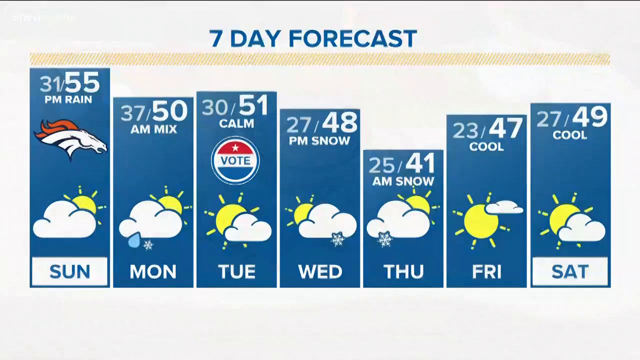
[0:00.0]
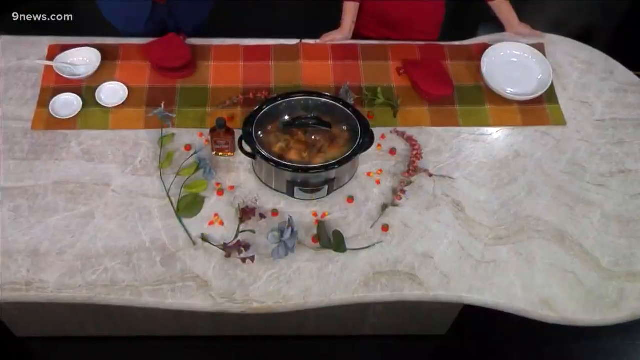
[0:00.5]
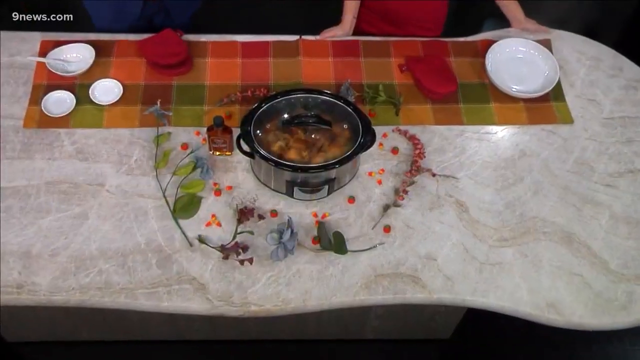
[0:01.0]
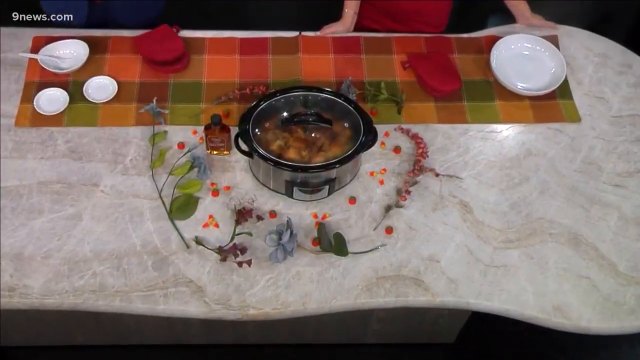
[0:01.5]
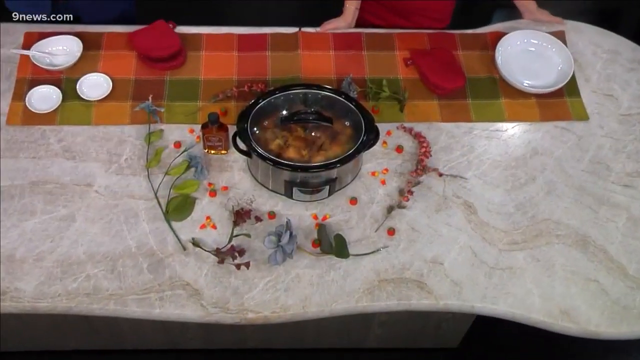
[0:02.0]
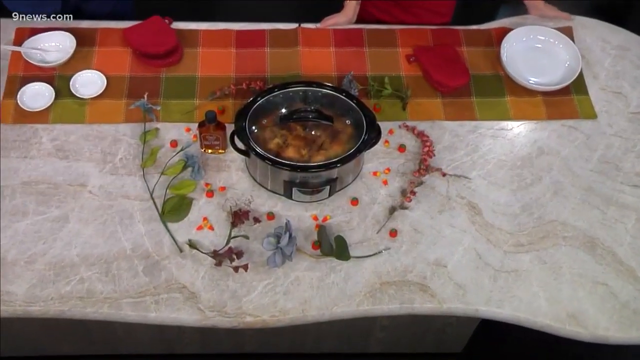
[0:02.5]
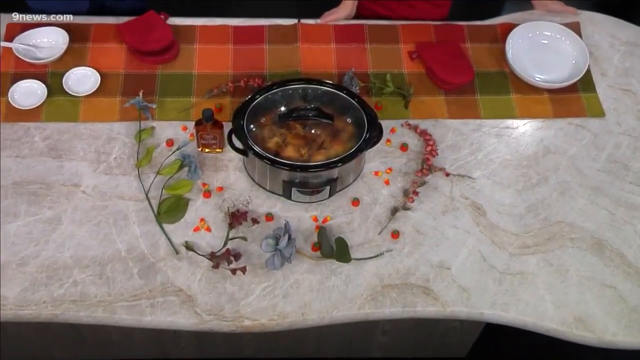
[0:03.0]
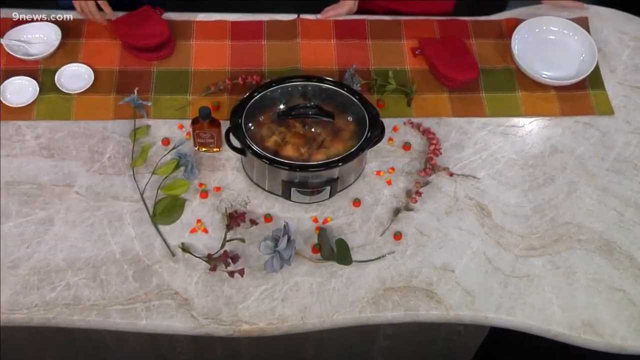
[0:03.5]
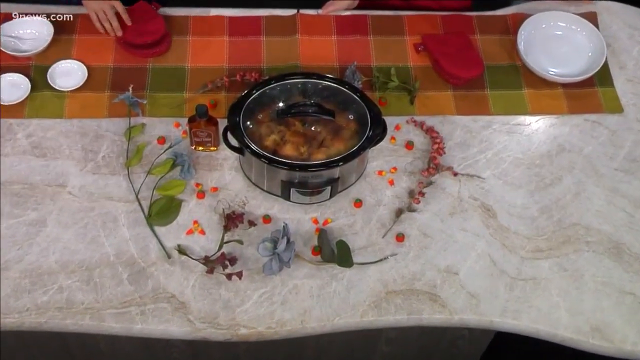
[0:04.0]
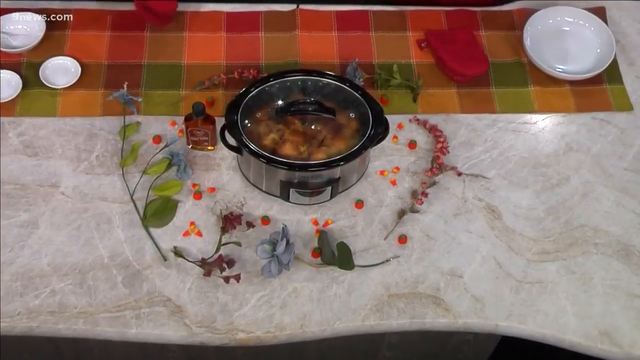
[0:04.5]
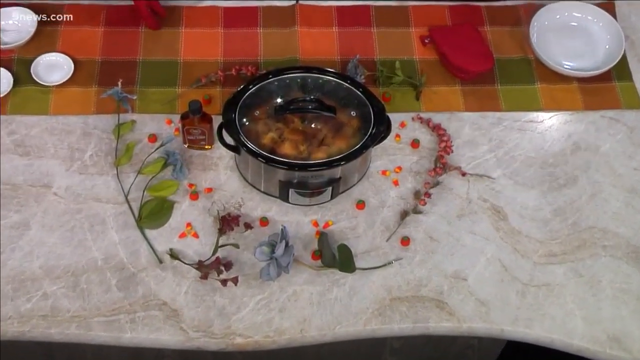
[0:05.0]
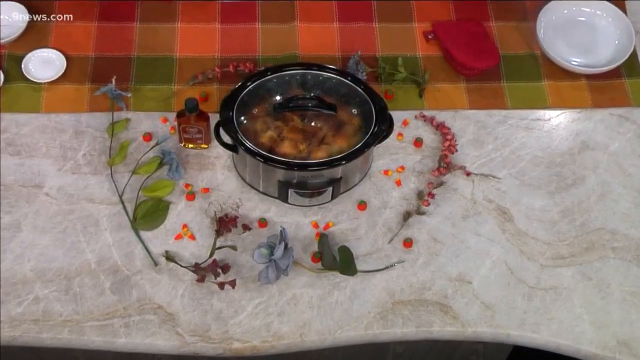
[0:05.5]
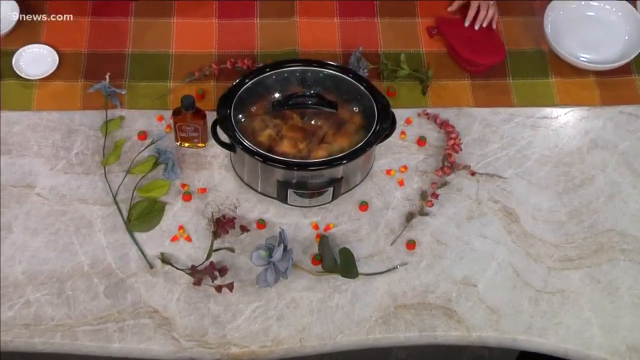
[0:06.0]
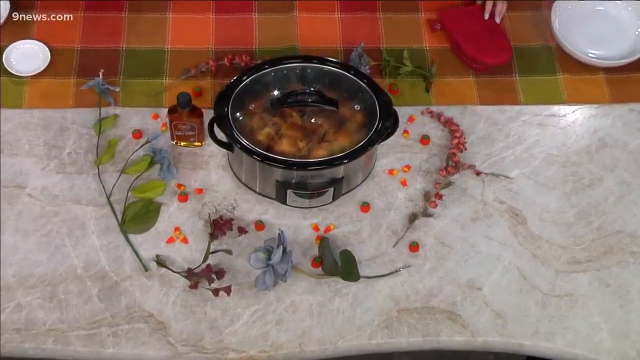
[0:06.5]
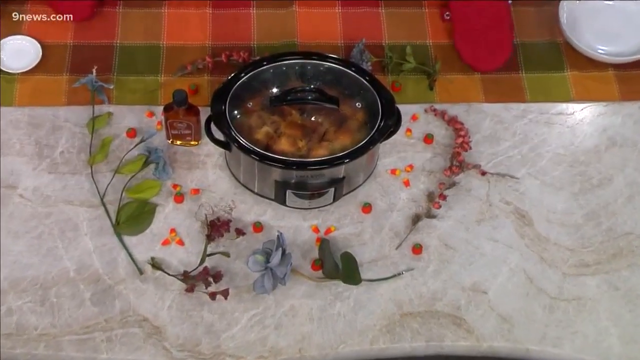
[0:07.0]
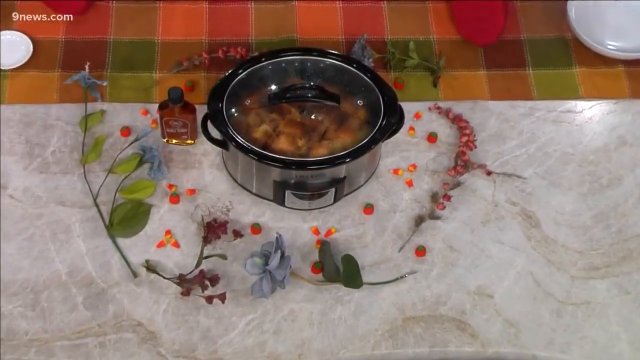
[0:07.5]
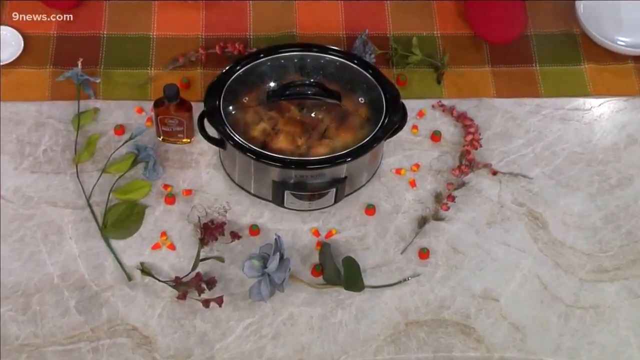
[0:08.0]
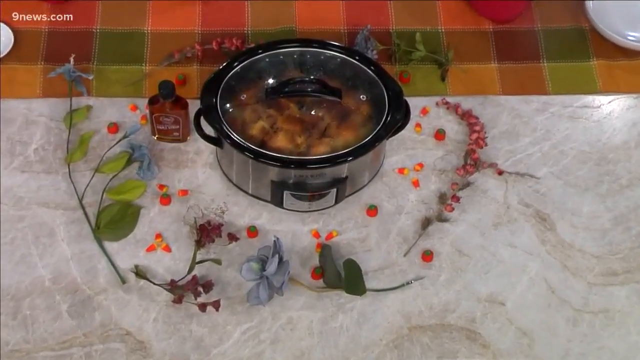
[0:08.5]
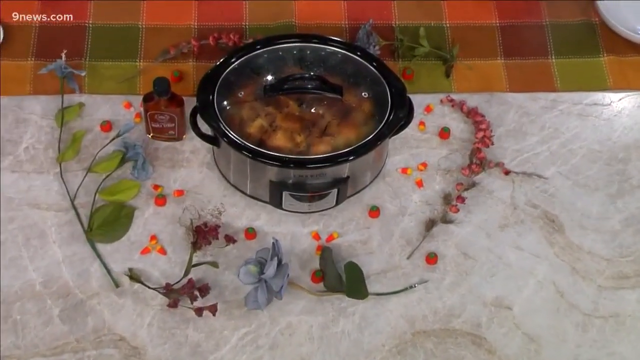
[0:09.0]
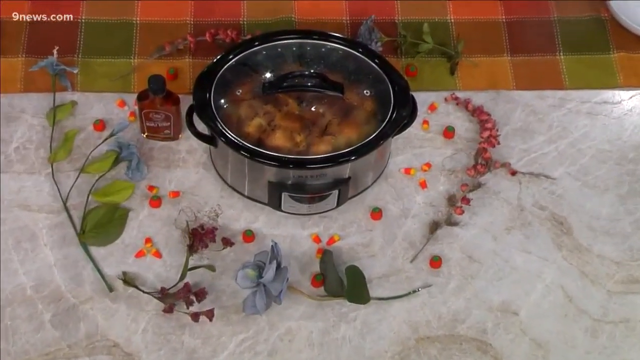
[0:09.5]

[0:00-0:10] The video opens with a seven-day weather forecast presented in bars, where each row shows a temperature or rain number and possibly a number of millimetres. The first bar shows the head of a horse with red hair on top, and it is sunny; the sun is represented by a yellow circle with rays on top. Mostly the forecast shows white clouds on a blue background, with white text and clearly visible numbers inside. The video then shifts to a table with three small plates on the left and two plates on the right, and a pot in the middle with something like a stew inside. Somebody is standing behind the desk with their hands open.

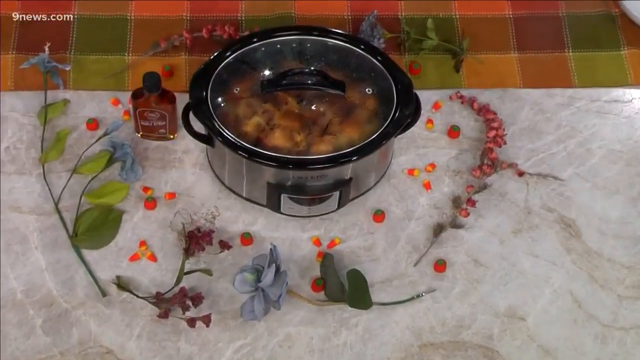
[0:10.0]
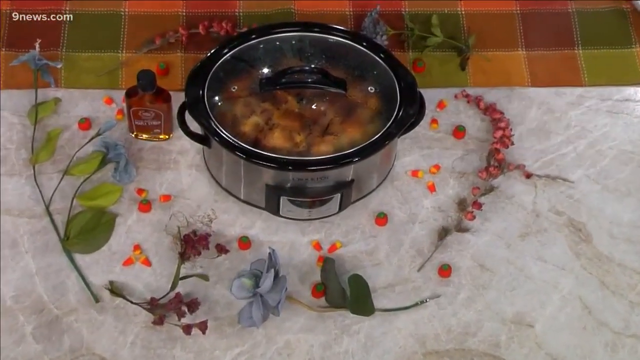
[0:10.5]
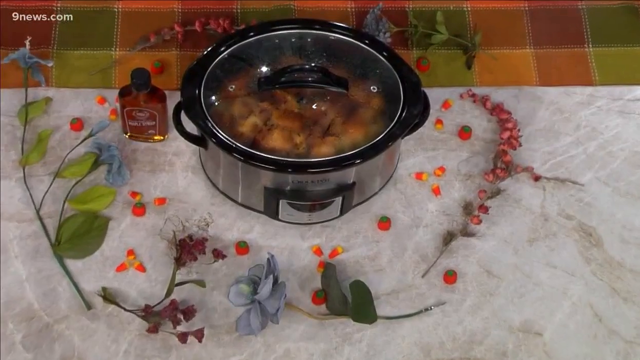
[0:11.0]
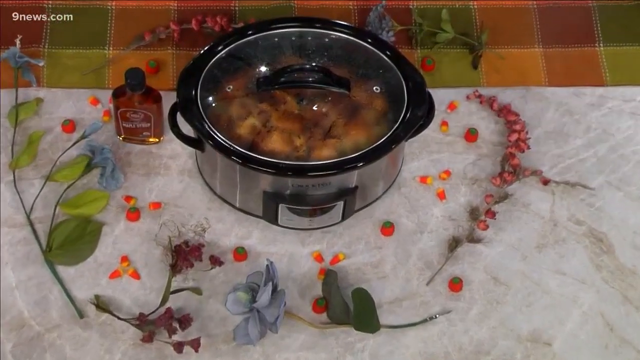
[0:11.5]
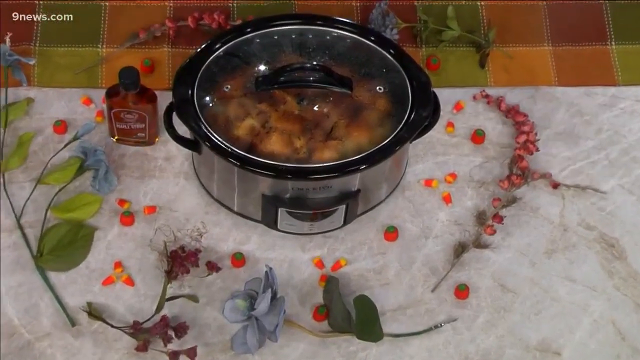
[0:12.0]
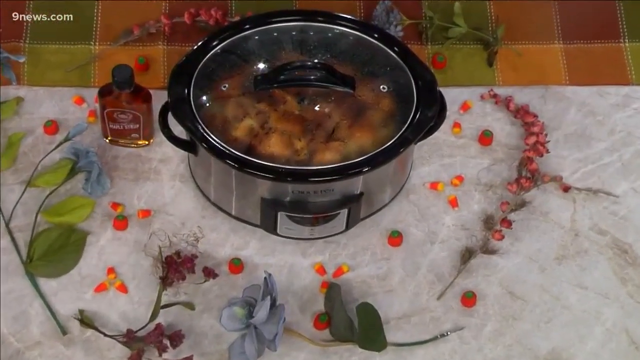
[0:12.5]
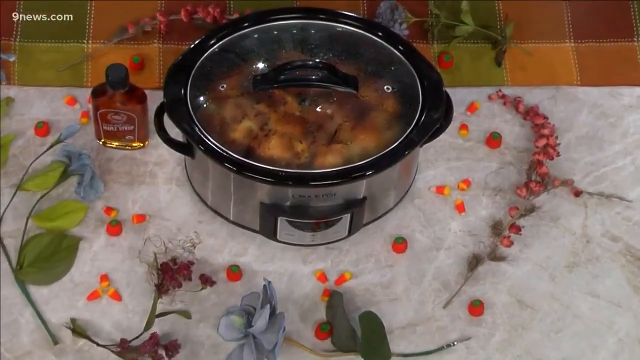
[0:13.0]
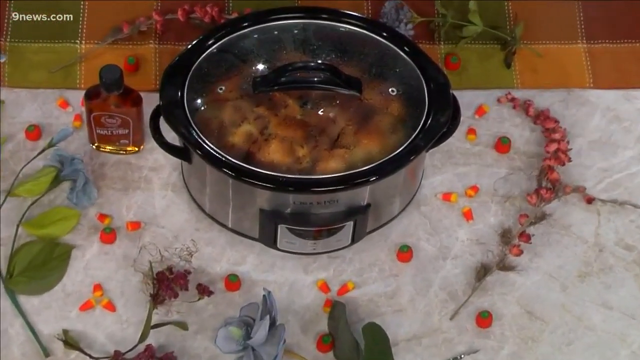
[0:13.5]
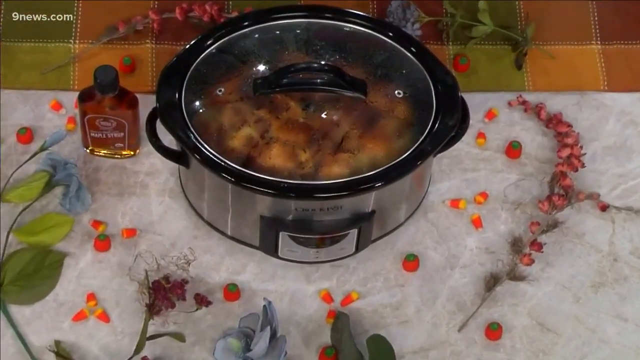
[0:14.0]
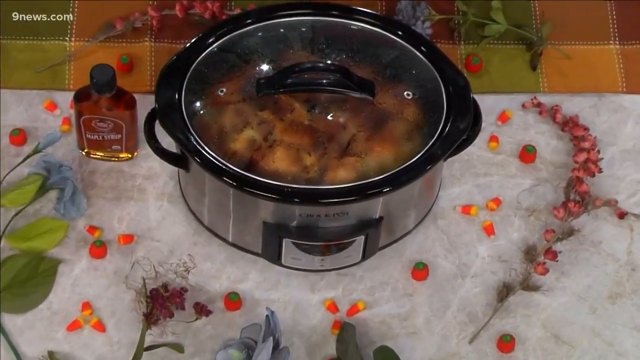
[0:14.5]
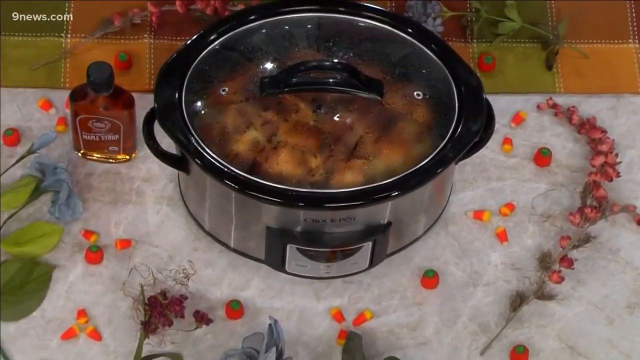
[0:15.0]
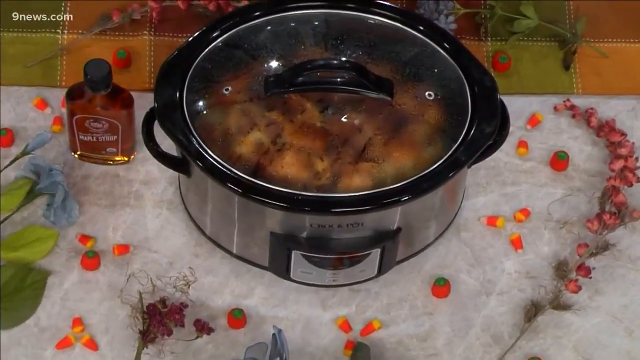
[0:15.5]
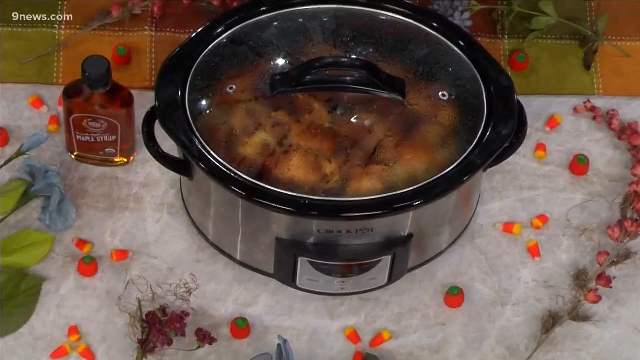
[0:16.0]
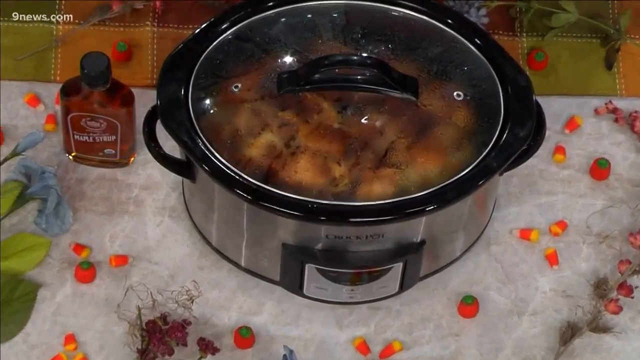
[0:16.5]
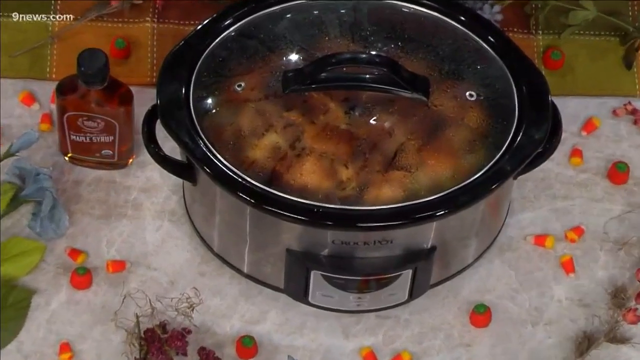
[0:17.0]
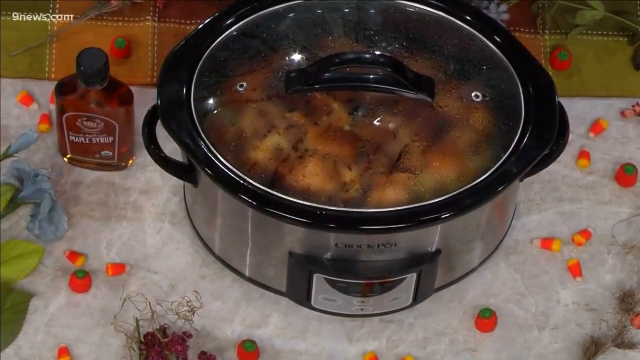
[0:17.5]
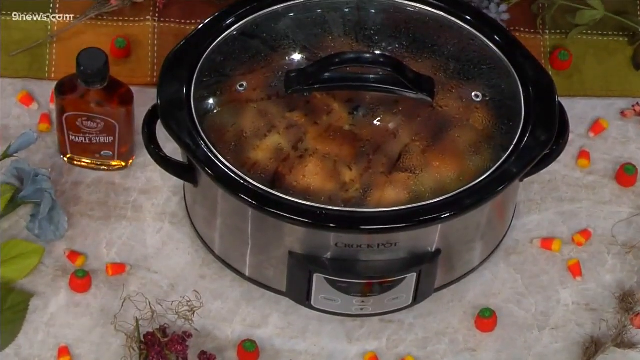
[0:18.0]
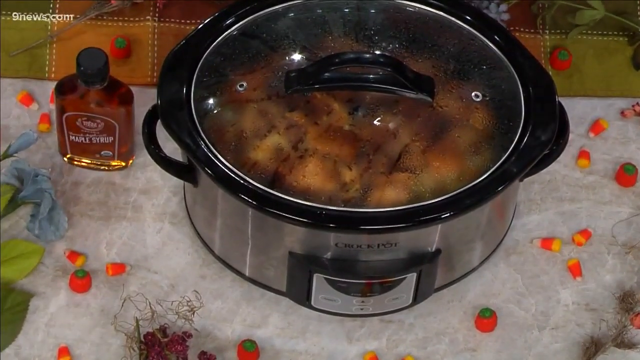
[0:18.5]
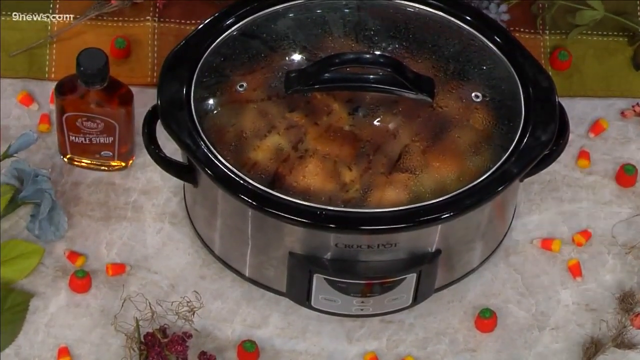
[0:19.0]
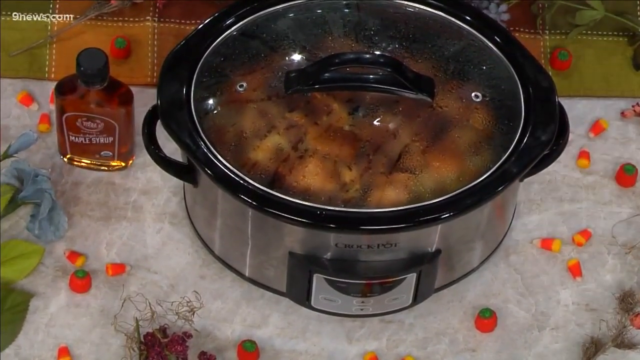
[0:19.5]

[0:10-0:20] The video zooms in for a closer look at the pot with its stew-like contents. It has silver sides and black handles. Right beneath it is something with black buttons, suggesting the pot could be electric, controlled or plugged in. The pot is sitting on a white cloth, and behind the white cloth is another cloth with different, very faint colours: green, orange, brown and red. In the top left corner is written "9news.com". To the left of the pot, on the white surface, is a small bottle with a lid. The pot is surrounded on the sides by colourful flowers, some green and some pink.